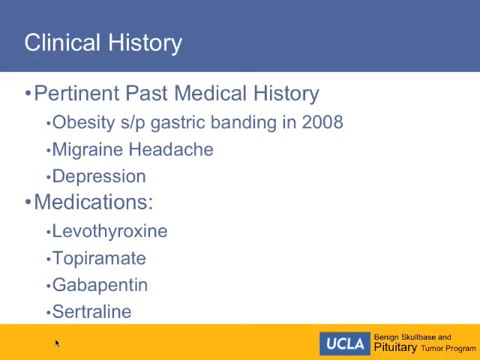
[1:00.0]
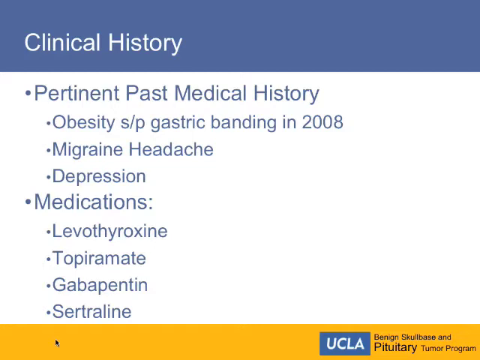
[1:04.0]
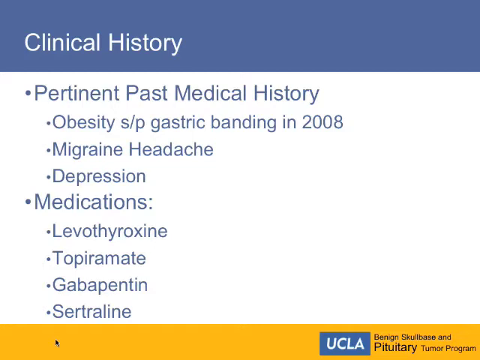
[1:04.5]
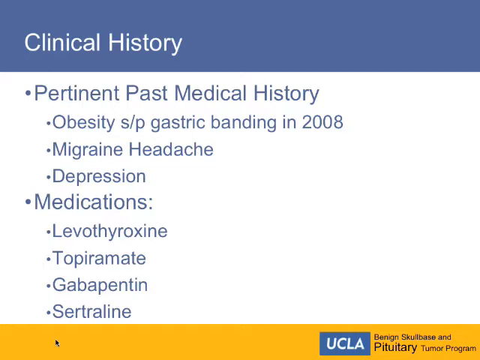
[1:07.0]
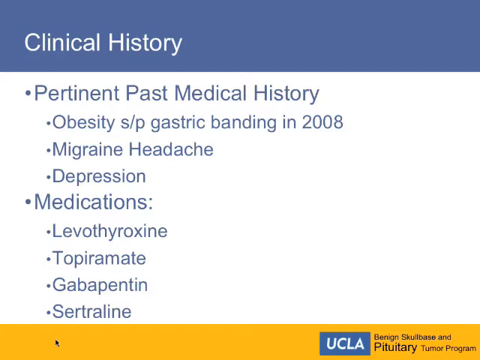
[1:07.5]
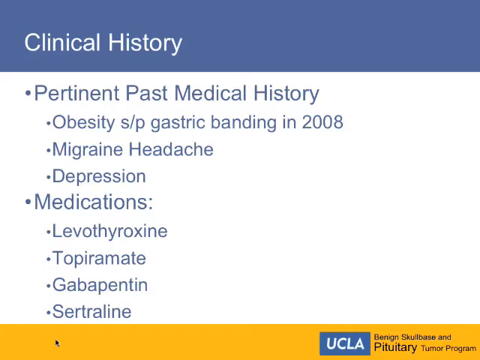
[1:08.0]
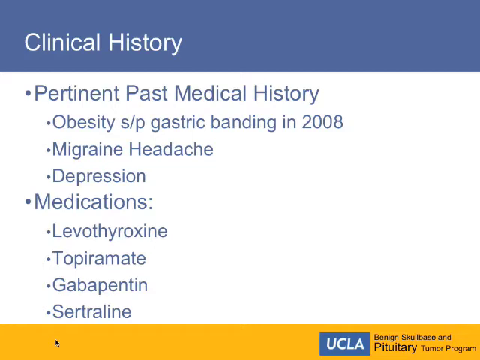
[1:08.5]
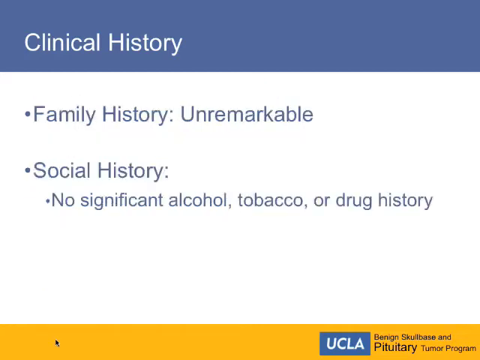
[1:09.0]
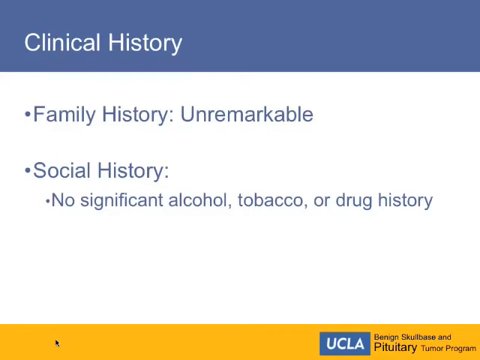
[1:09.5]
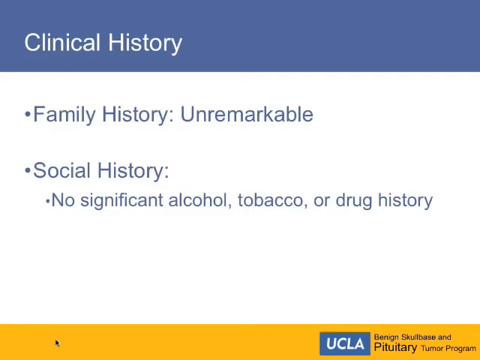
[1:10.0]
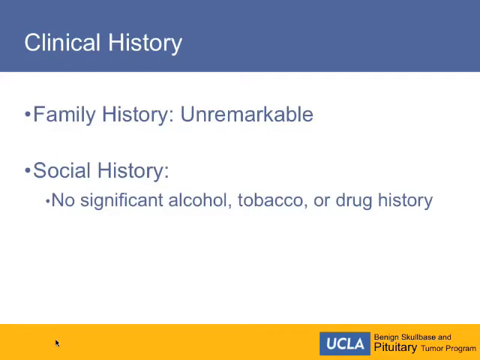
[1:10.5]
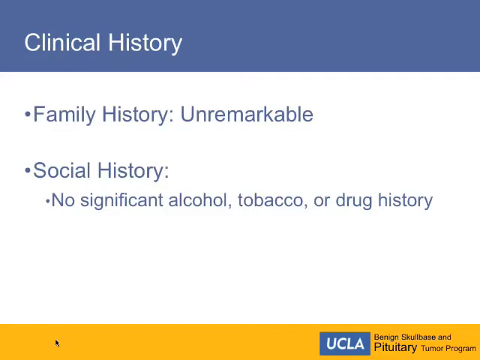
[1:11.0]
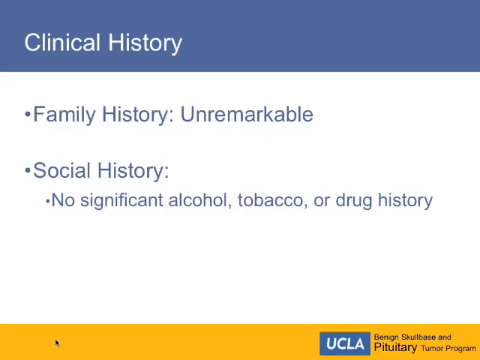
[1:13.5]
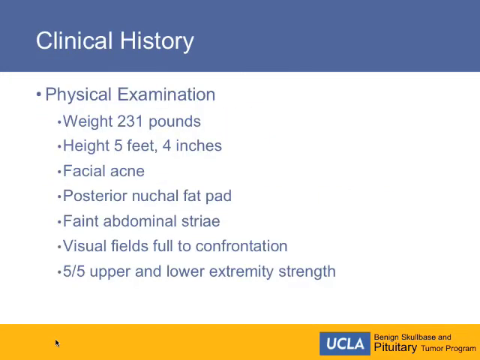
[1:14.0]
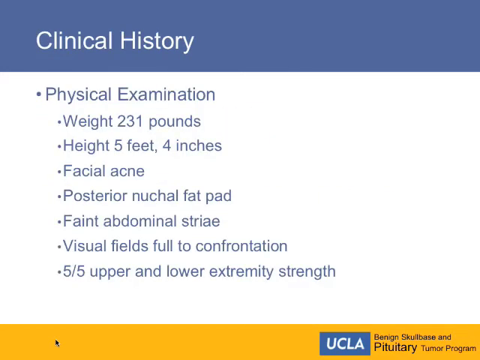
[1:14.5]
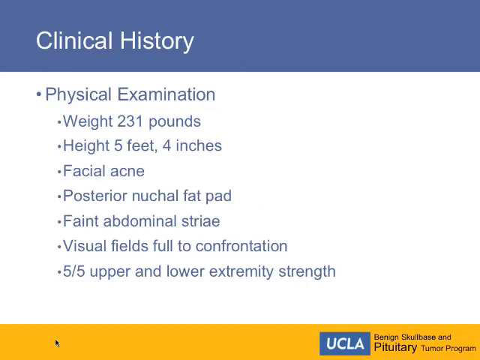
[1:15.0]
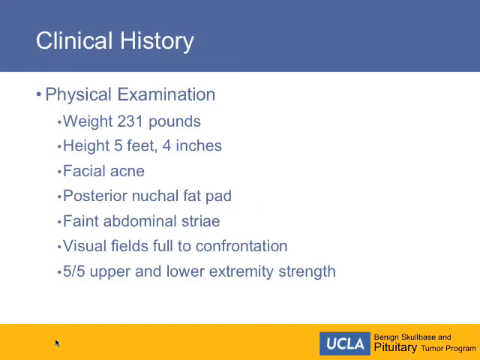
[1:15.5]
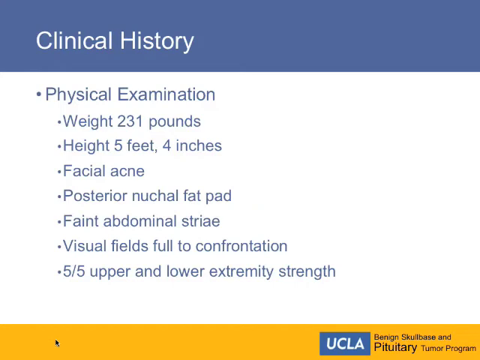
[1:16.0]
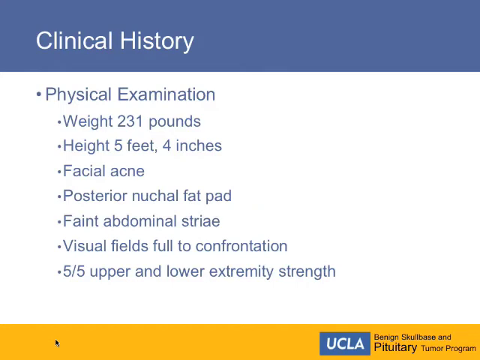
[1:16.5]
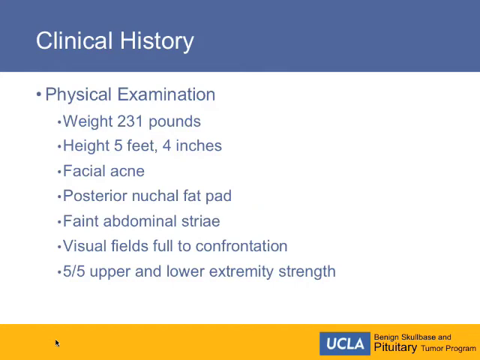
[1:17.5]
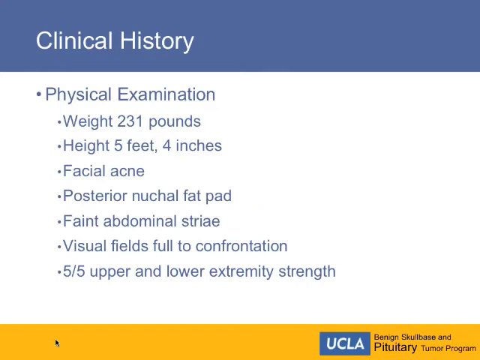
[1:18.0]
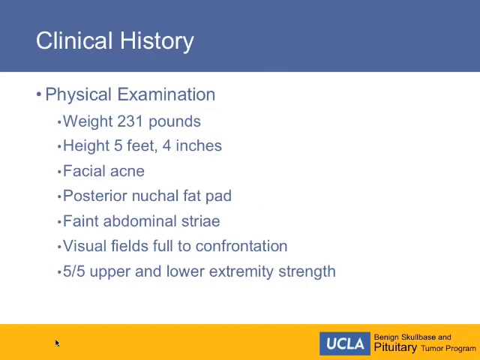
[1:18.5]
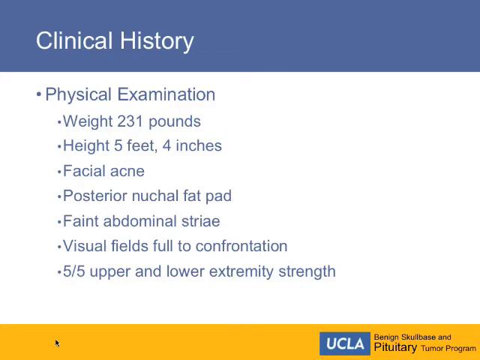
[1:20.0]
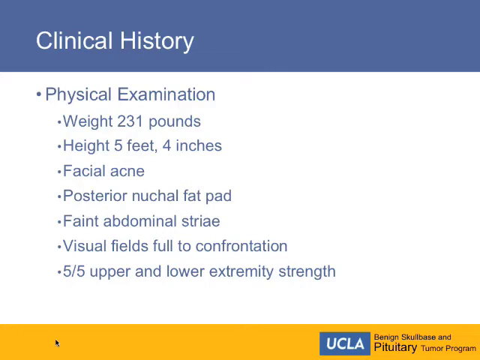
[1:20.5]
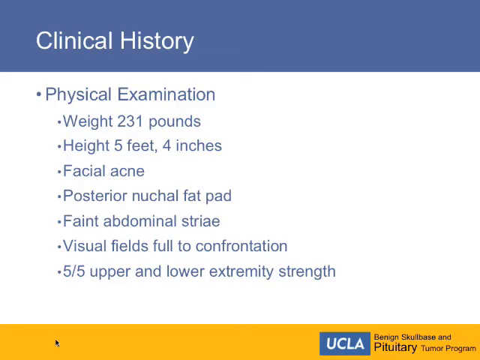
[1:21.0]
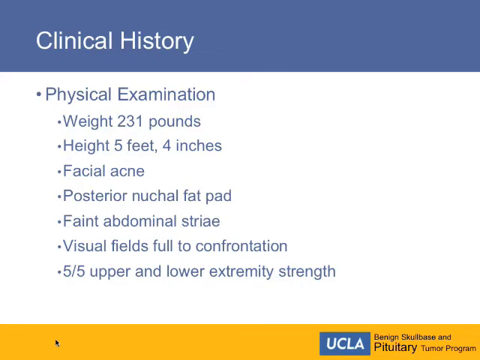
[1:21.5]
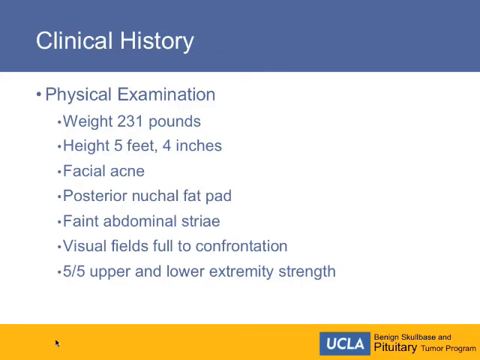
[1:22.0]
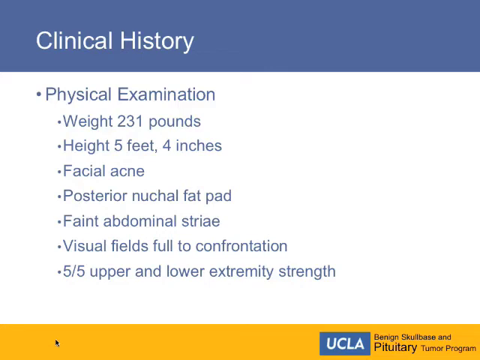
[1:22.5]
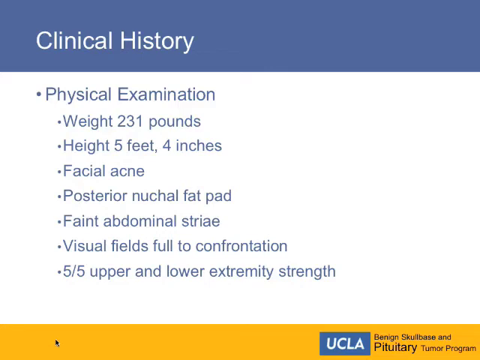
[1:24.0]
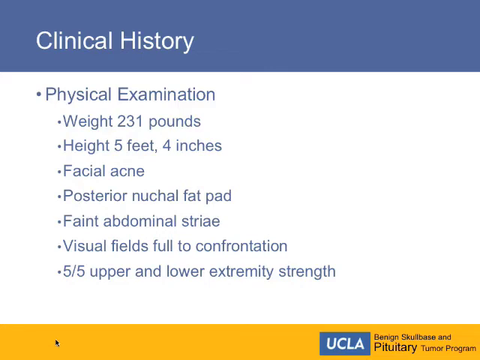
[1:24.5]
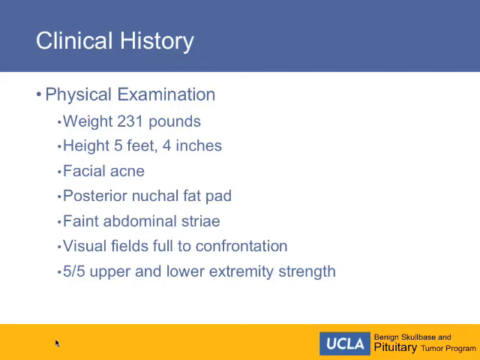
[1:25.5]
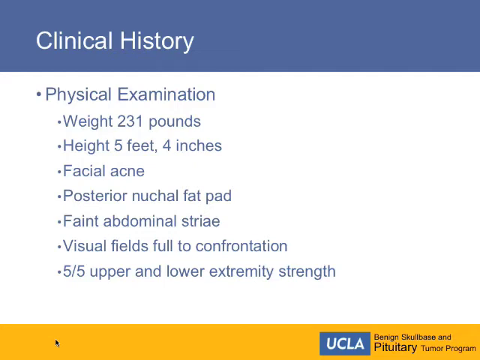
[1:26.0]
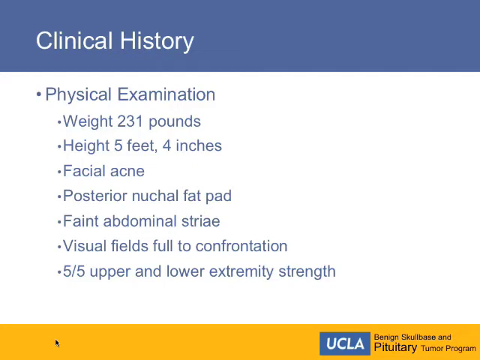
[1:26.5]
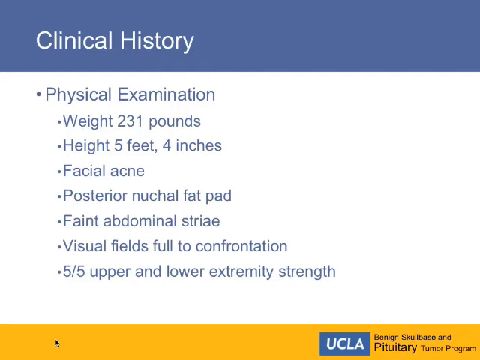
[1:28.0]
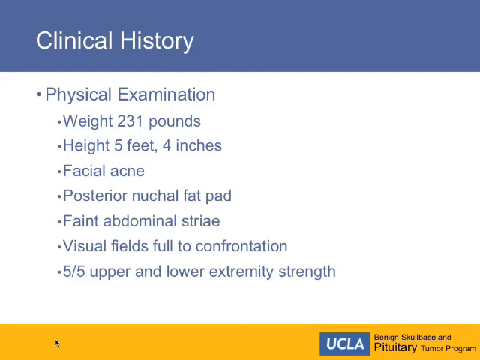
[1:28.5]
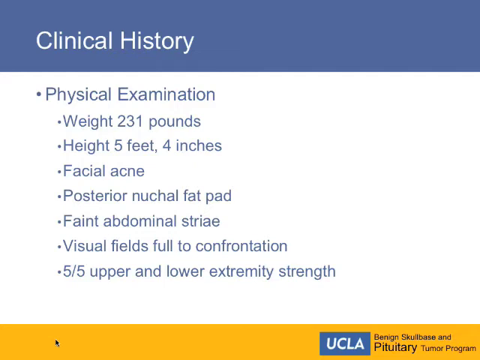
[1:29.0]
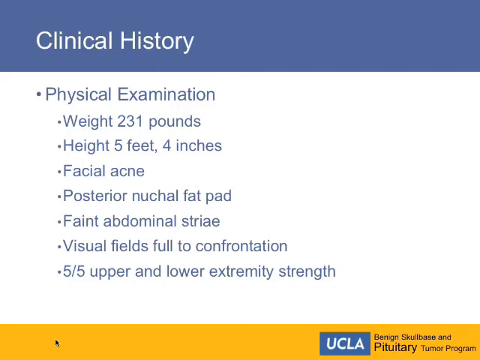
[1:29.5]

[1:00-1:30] The next slide still reads "clinical history" at the top and has two big bullet points, with three smaller points beneath the first and four beneath the second. The first big bullet point reads "pertinent past medical history," followed by "obesity, S/P gastric banding in 2008," "migraine headache," and "depression." The second reads "medications," followed by "levothyroxine, topiramate, gabapentin, censitraline." The video then switches to the next slide, which shows "family history" with "unremarkable," and then "social history" with "no significant alcohol or tobacco or drug history."